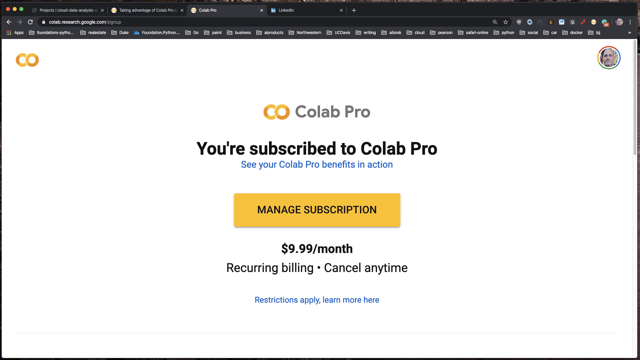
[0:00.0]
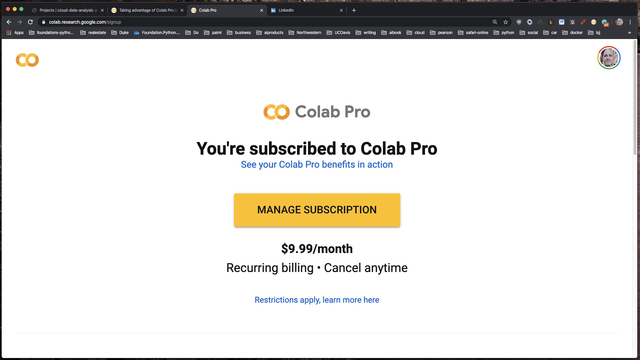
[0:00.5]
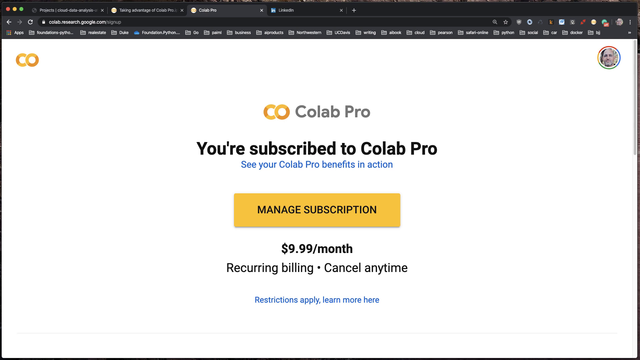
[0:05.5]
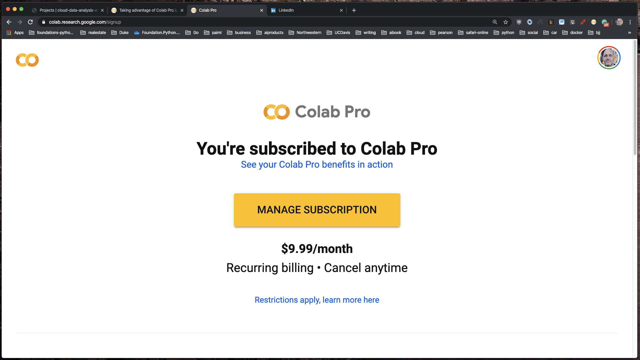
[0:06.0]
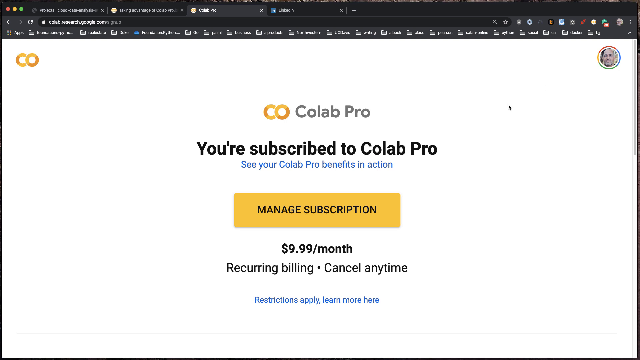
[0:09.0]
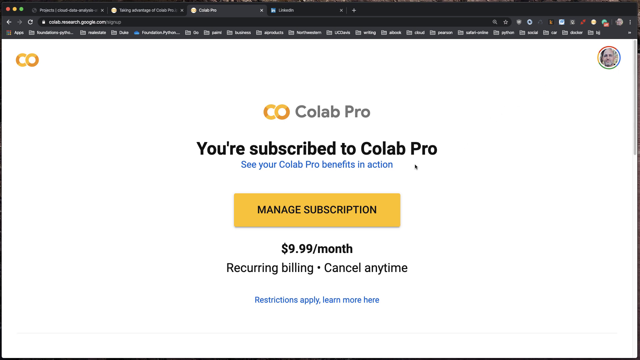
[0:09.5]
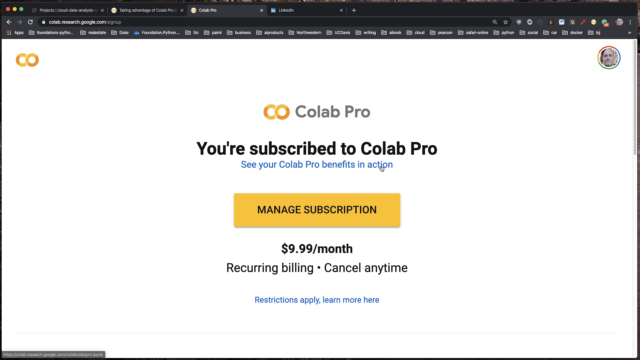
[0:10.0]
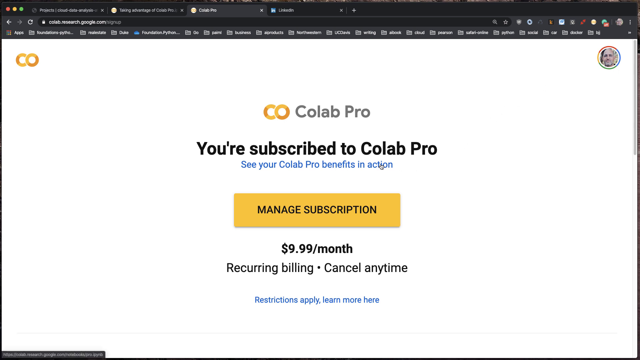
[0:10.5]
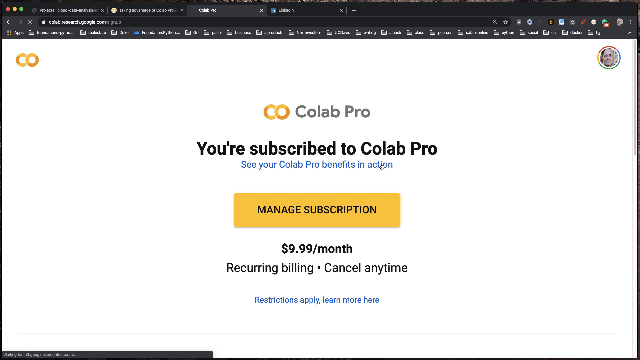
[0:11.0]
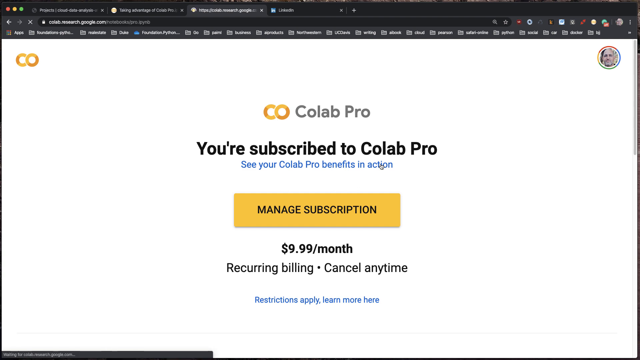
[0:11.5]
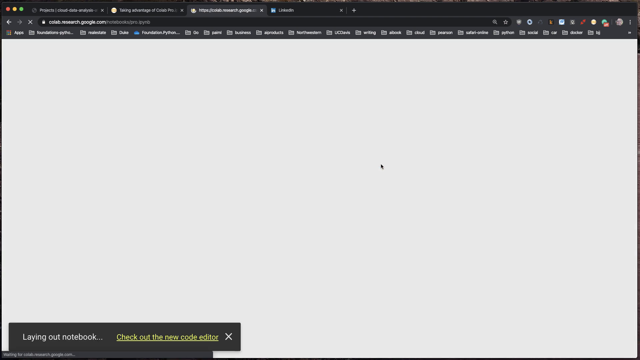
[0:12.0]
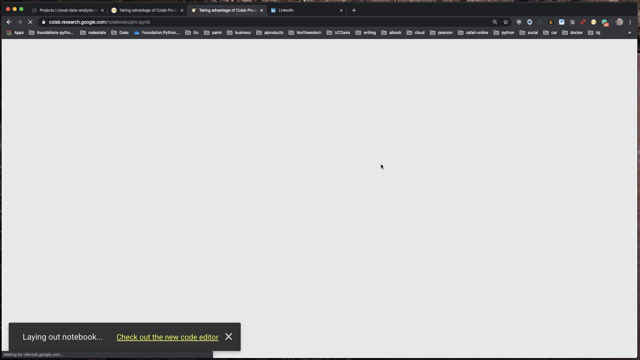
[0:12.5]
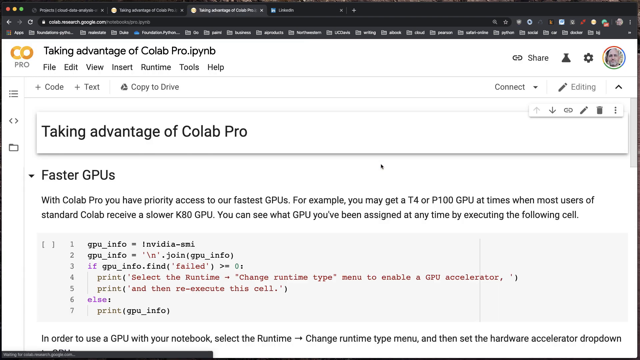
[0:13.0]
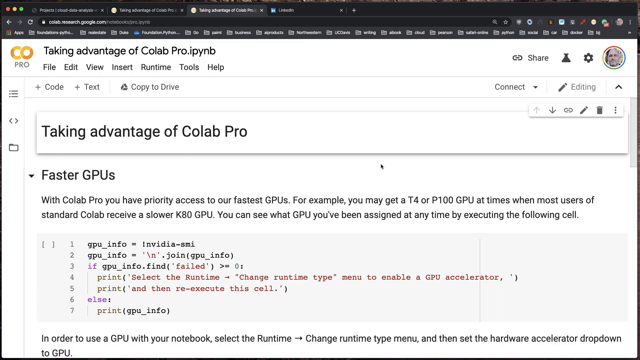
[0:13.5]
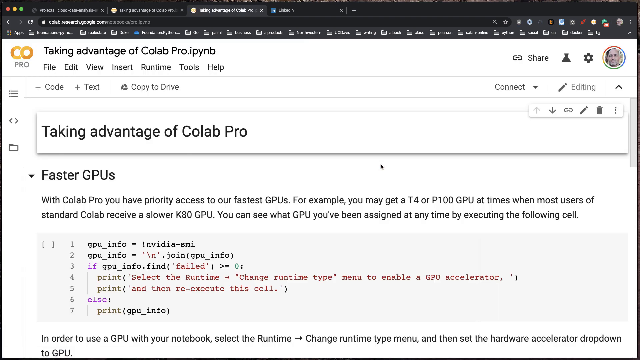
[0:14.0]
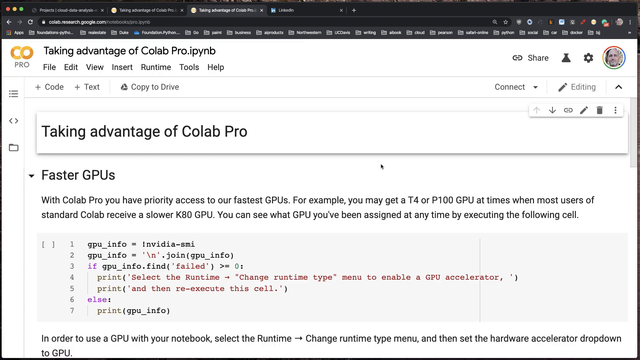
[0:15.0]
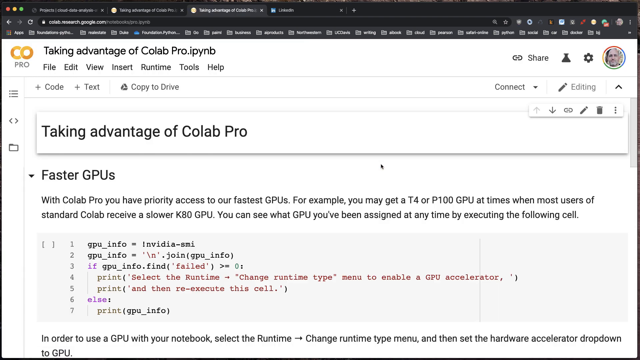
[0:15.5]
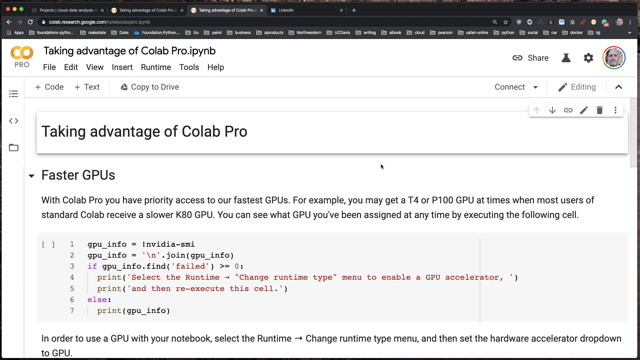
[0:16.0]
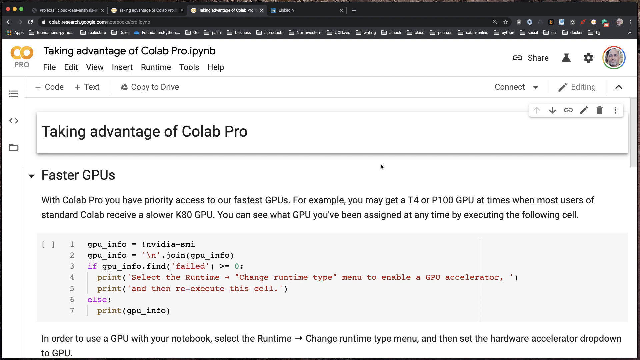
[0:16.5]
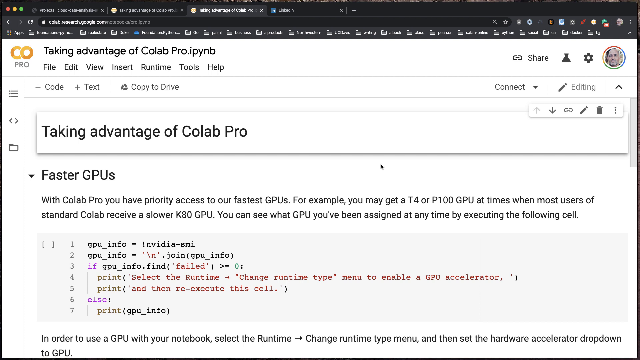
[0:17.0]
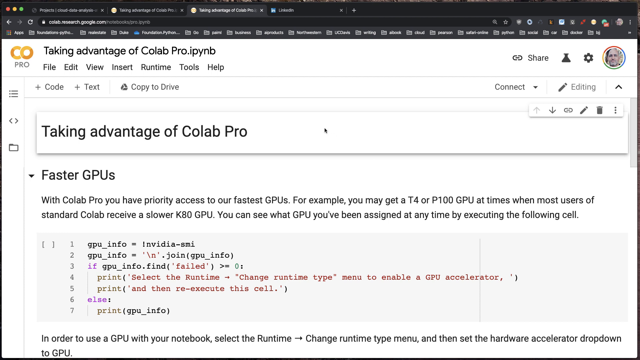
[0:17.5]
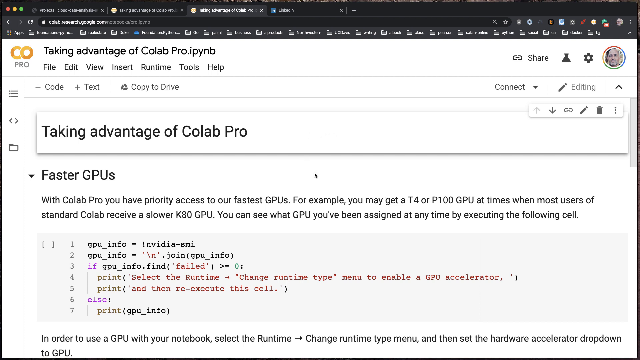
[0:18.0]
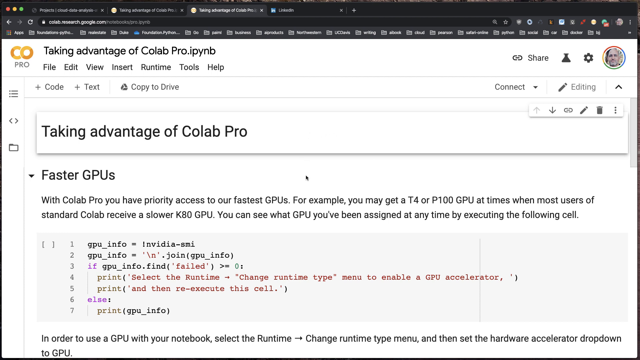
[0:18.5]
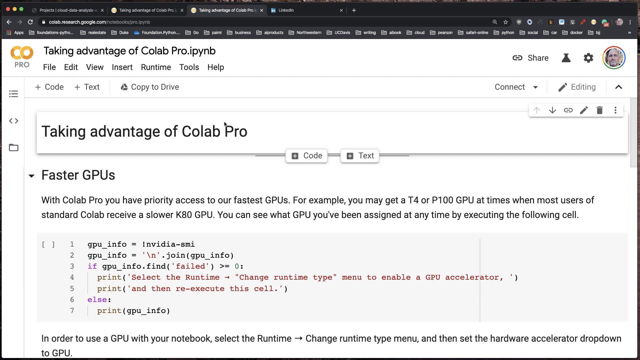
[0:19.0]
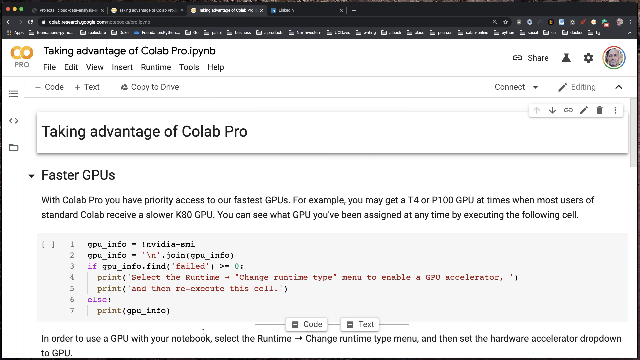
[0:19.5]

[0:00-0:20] The screen shows a subscription page with text reading "collab pro," "you subscribe to collab pro," "see collab pro benefits in action," "manage subscription," "999, a month" and "taking advantage of collab pro," along with "ipynb." The page looks dated; it is the manage-subscription page for Collab Pro. The view then moves to a page that appears to show faster GPUs and some coding information. Text reads "see your Collab Pro," next to what seems to be an infinity symbol. It is on a Mac computer, and a face of an unidentified man appears in the top right corner.